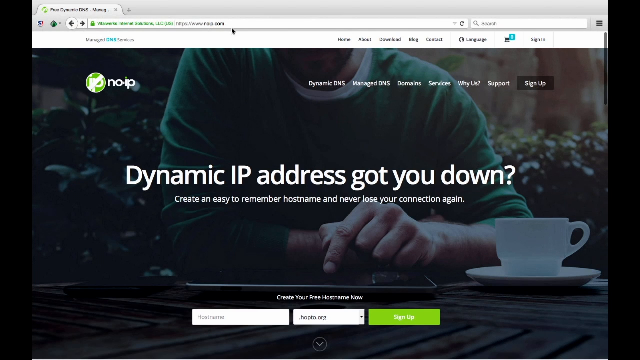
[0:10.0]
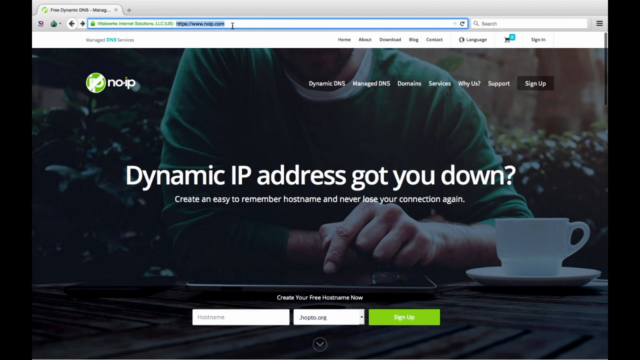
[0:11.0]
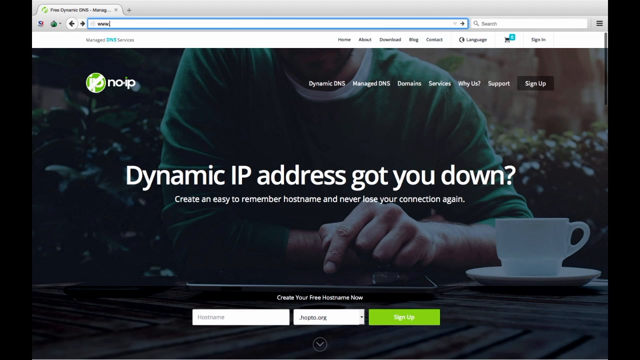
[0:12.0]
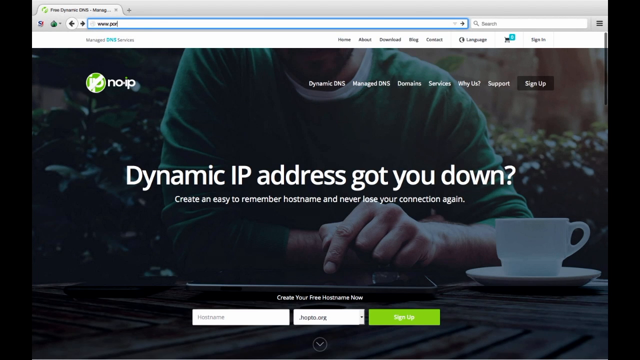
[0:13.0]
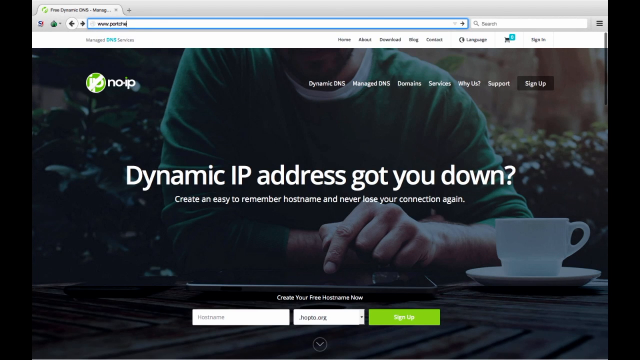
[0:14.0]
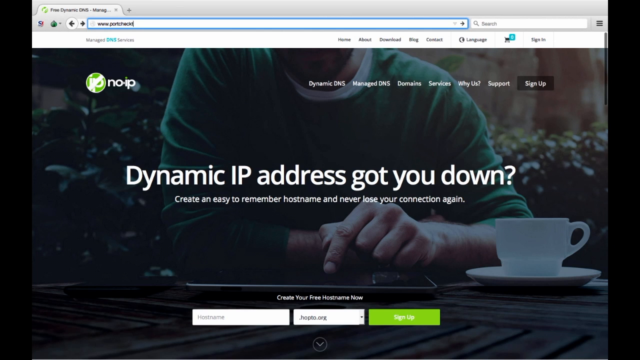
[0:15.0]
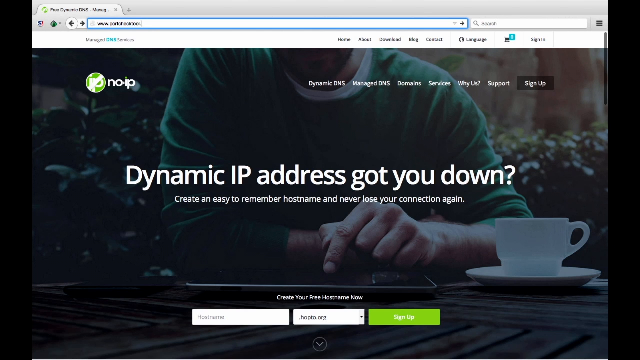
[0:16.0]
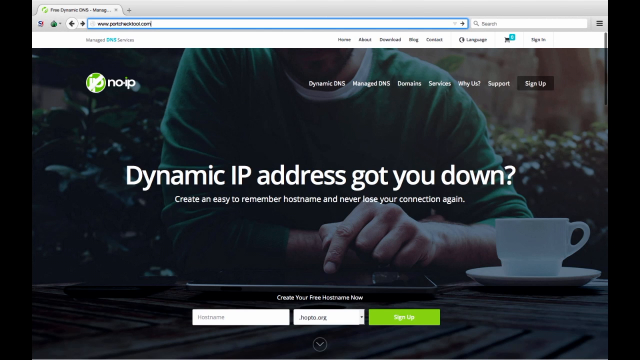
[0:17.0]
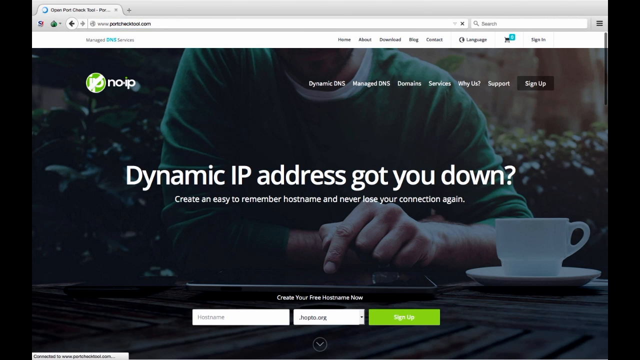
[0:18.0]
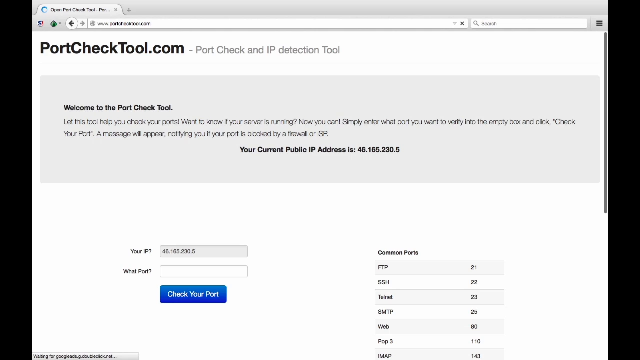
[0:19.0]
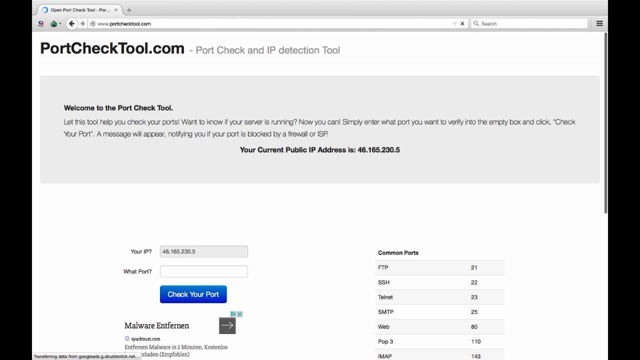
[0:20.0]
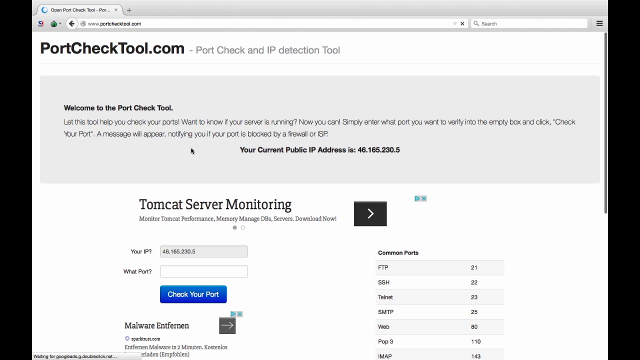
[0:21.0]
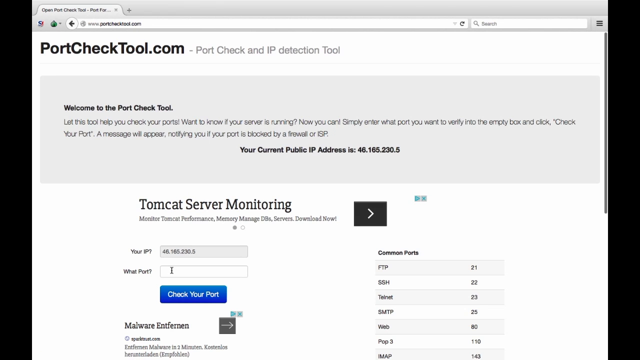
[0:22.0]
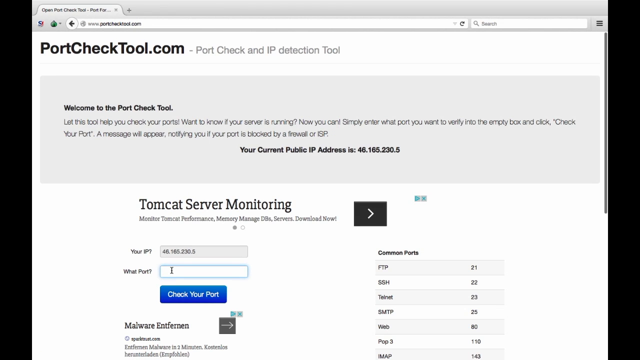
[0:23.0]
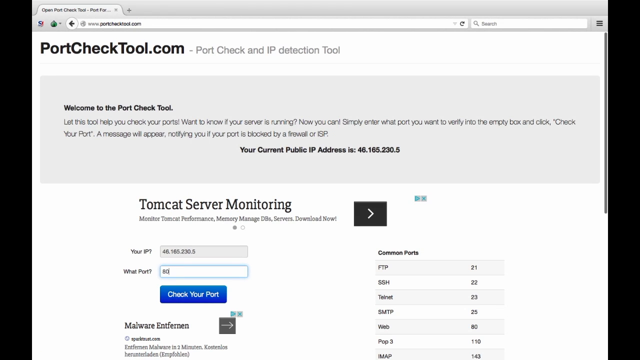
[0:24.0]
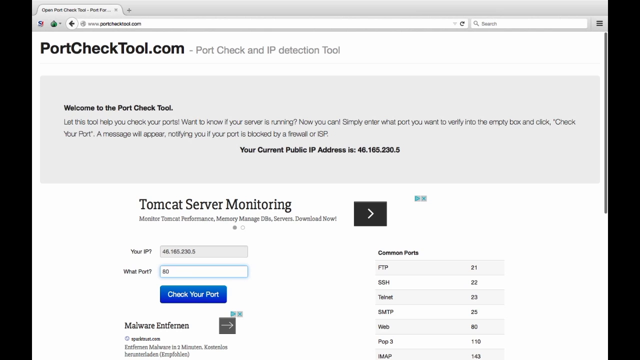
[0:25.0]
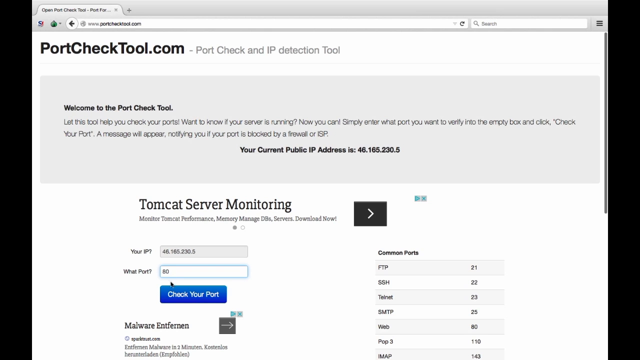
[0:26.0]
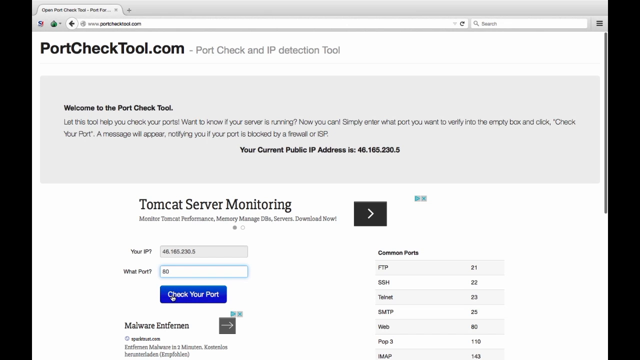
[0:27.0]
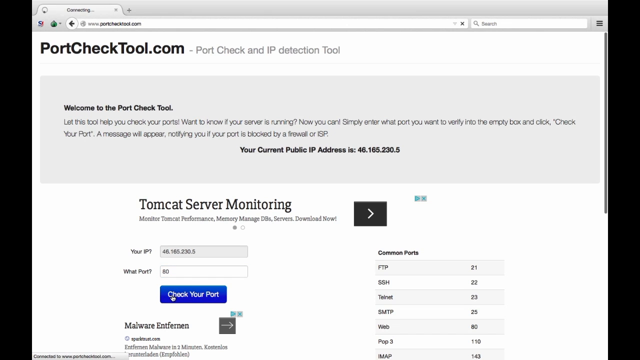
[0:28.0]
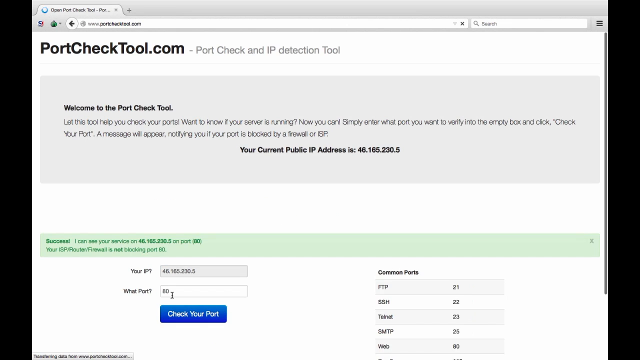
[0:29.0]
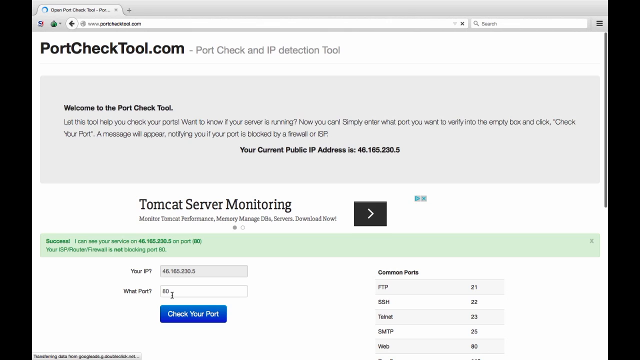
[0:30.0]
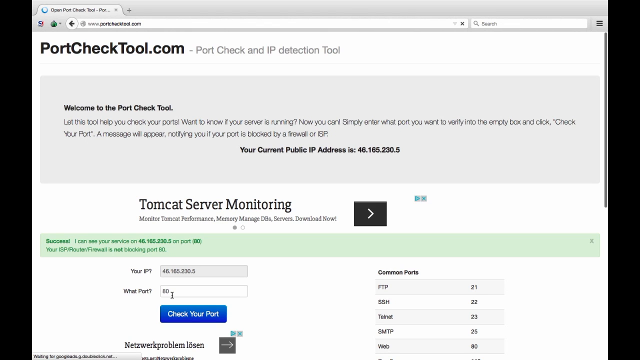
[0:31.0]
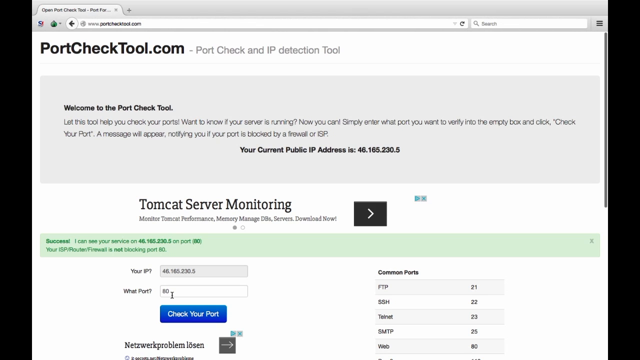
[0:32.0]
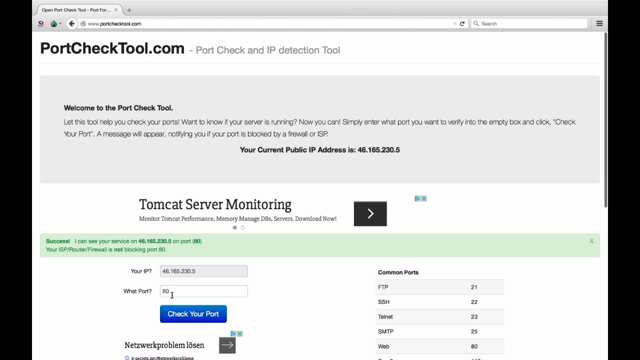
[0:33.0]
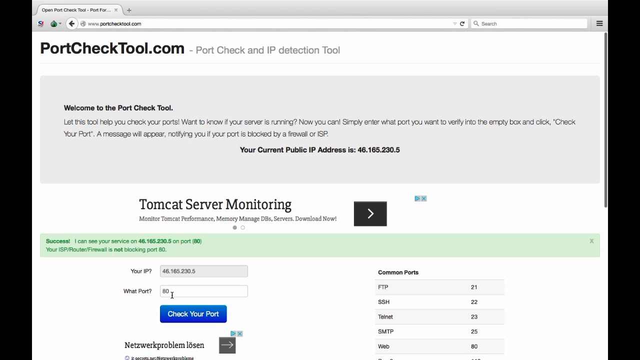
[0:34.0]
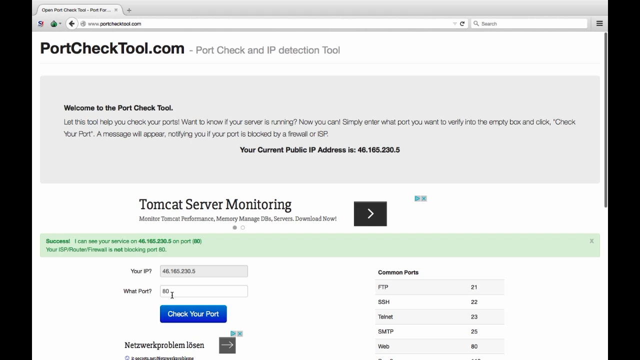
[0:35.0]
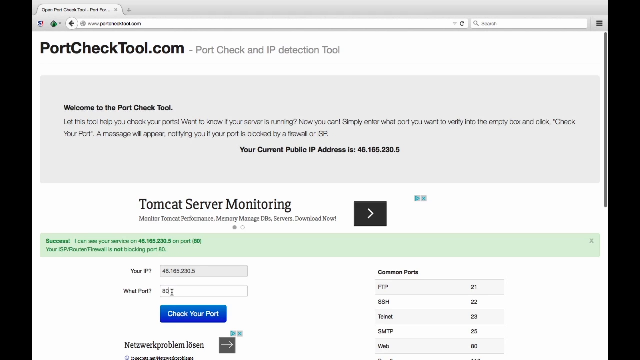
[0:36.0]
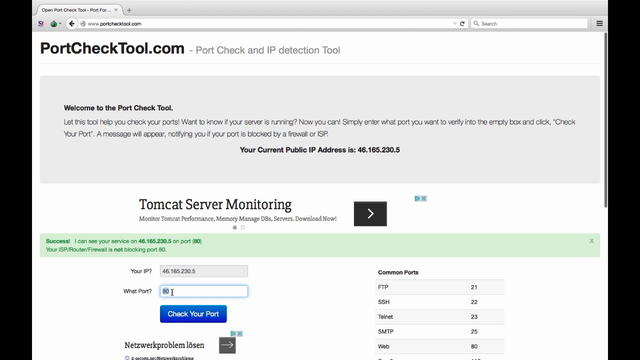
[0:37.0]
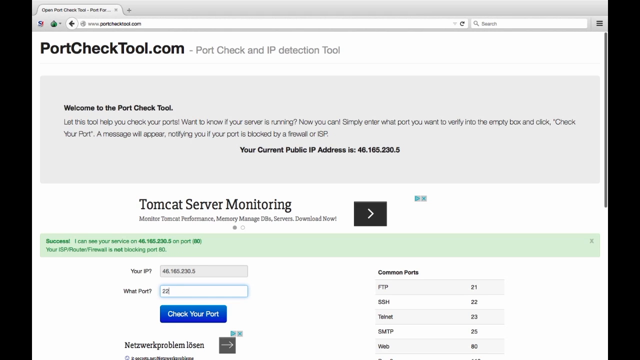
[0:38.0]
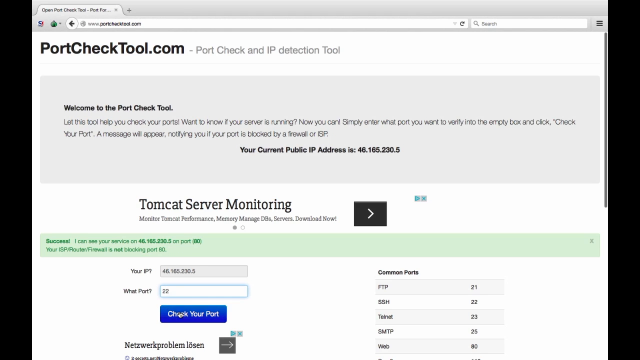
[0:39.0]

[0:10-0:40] This part is an ad for the No IP company. At the opening the image is dark and a little hard to see, but what looks like a man is there, maybe typing on a tablet or something on a table, with a white coffee cup next to him. Text reads "dynamic IP address got you down. Create an easy-to-remember host name and never lose your connection again." The image is a web page, with a list of pages across the top, including options for dynamic and maybe DNS; not all of them are legible. The ad then shifts to another page that reads "portchecktool.com" and "Port checks and IP detection tool". Below is a gray pattern or gray box that says "welcome to port check tool. Let this tool help you check your", in small, hard-to-read text. It says "your current public IP address is" followed by the numbers. Underneath that it says "Tomcat server monitoring", followed by options including your IP, what port, check your port, and malware.